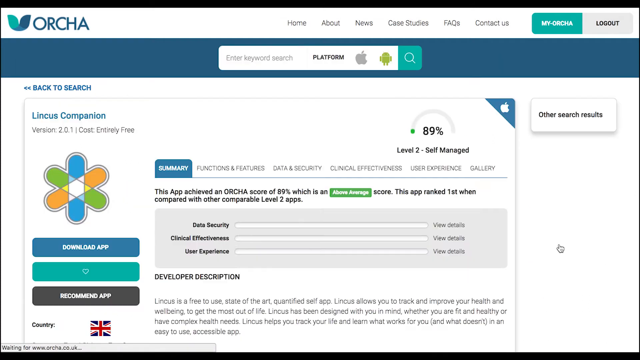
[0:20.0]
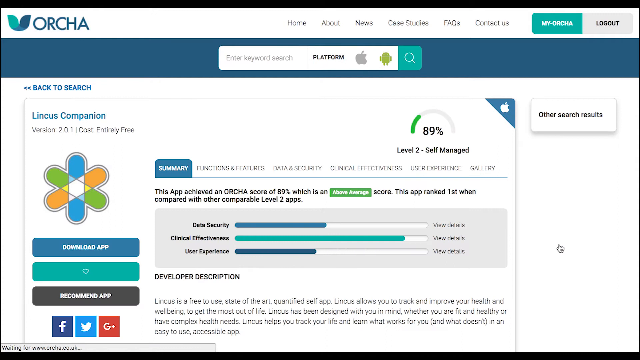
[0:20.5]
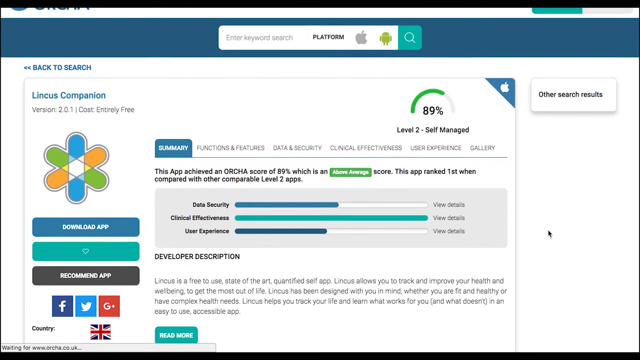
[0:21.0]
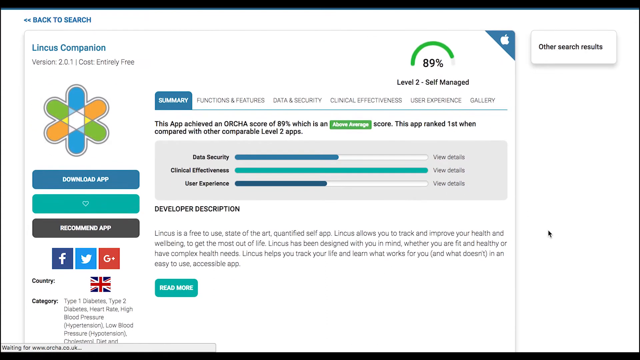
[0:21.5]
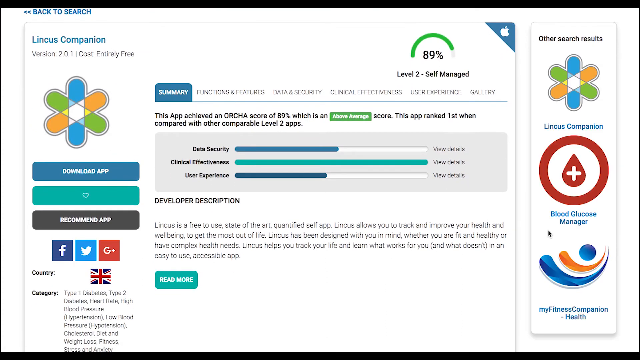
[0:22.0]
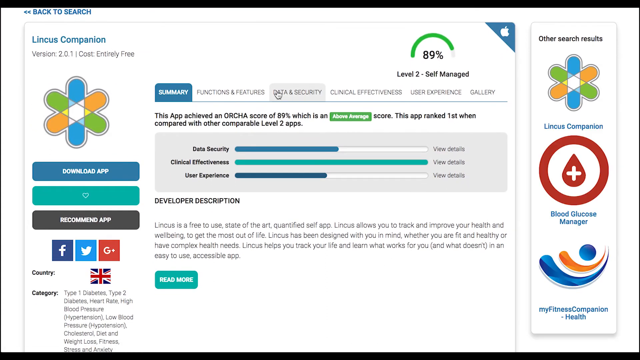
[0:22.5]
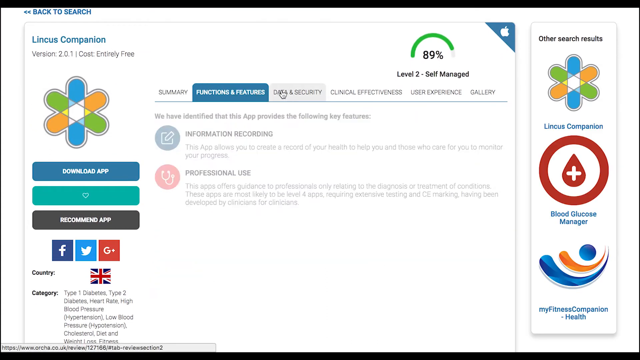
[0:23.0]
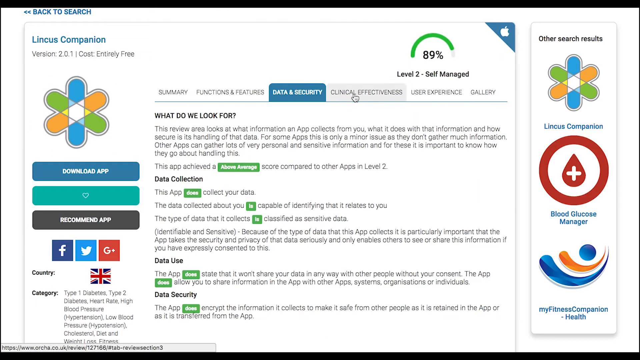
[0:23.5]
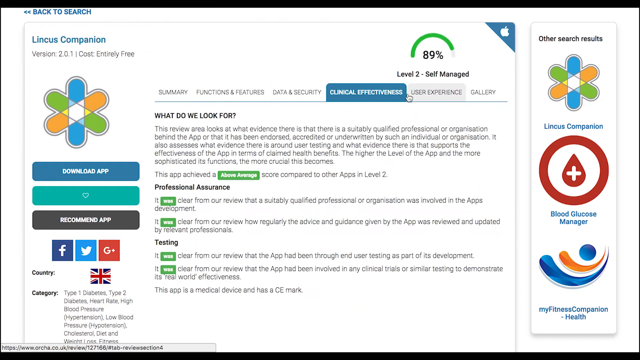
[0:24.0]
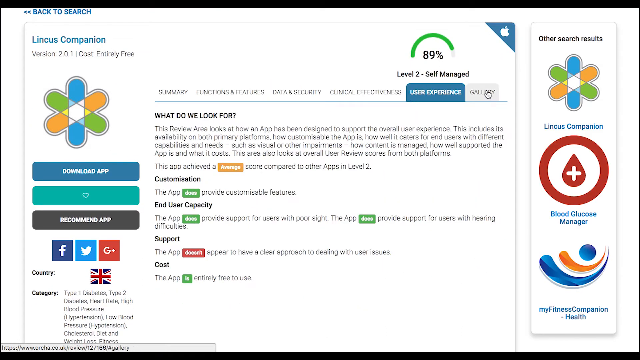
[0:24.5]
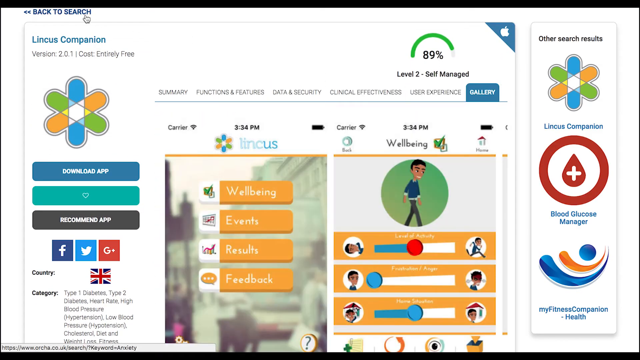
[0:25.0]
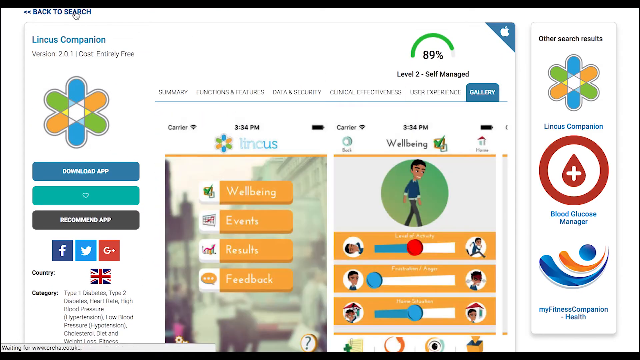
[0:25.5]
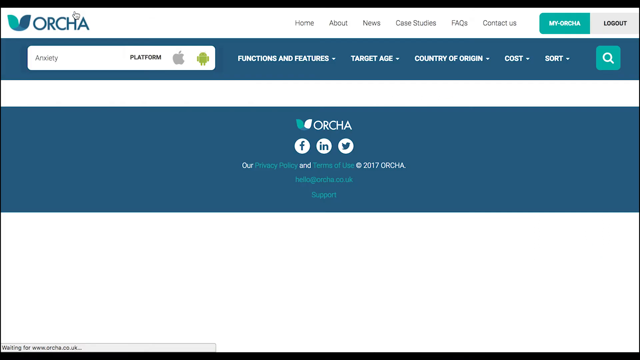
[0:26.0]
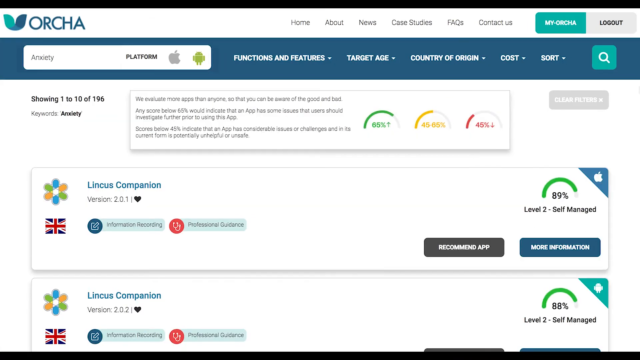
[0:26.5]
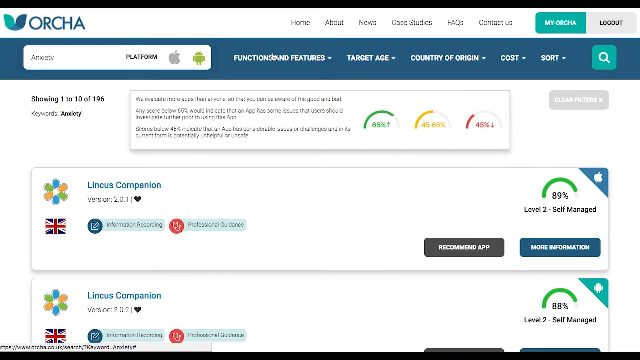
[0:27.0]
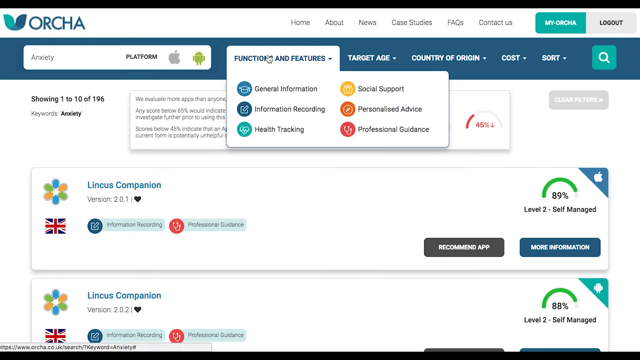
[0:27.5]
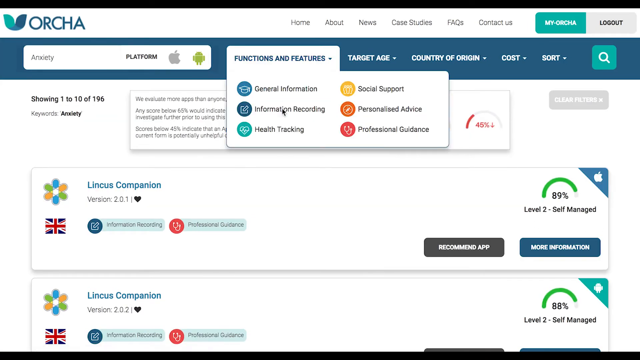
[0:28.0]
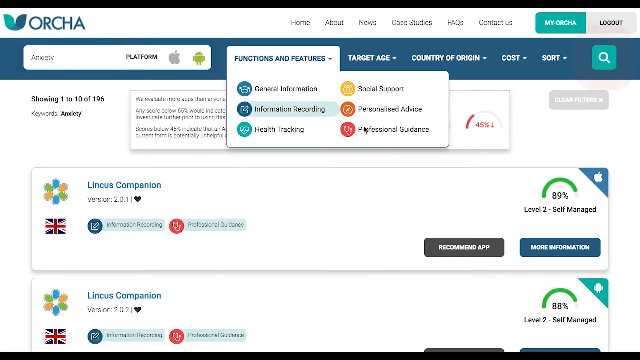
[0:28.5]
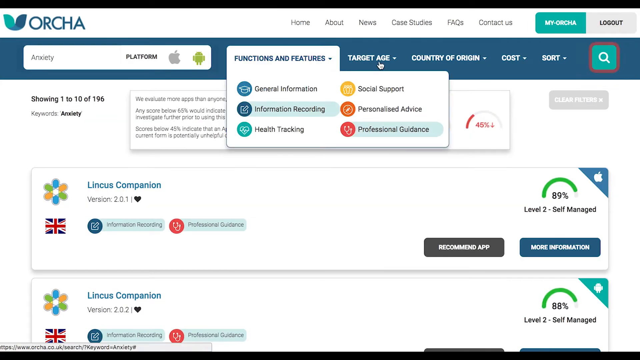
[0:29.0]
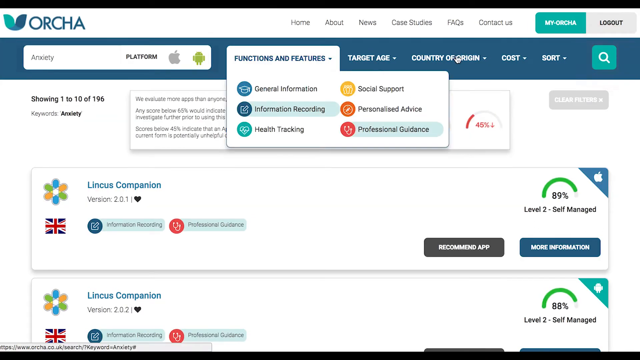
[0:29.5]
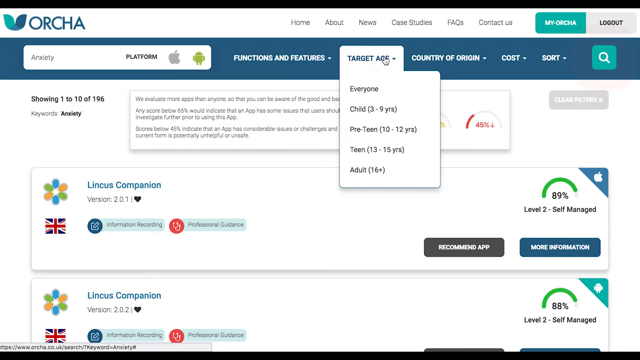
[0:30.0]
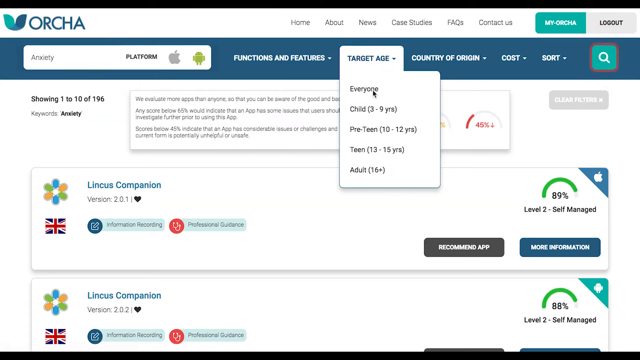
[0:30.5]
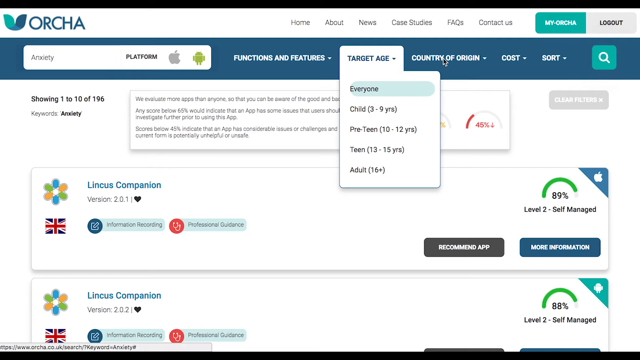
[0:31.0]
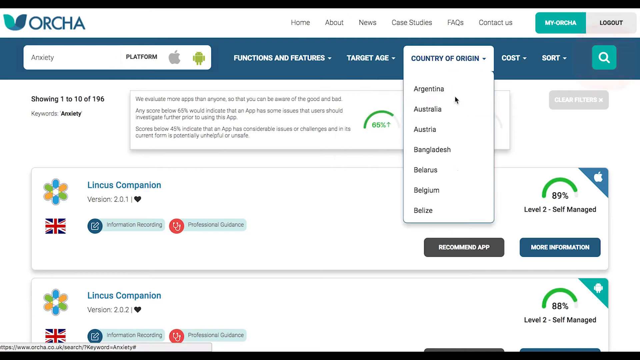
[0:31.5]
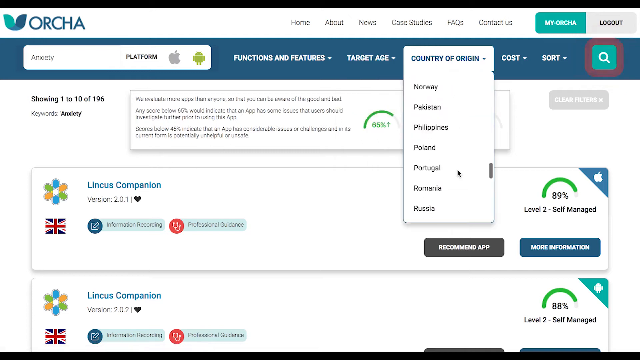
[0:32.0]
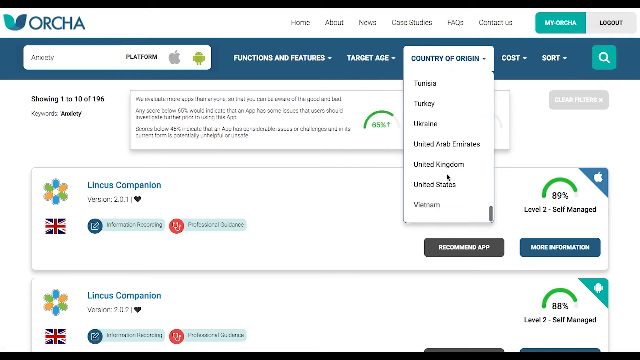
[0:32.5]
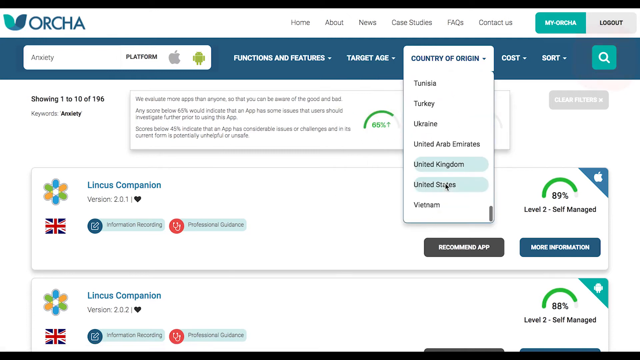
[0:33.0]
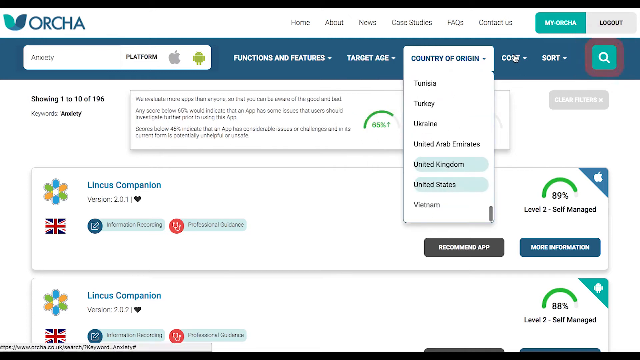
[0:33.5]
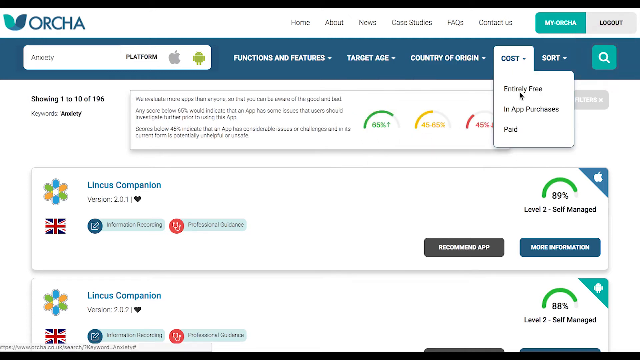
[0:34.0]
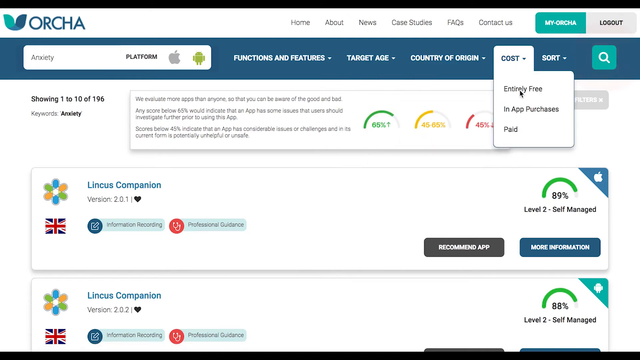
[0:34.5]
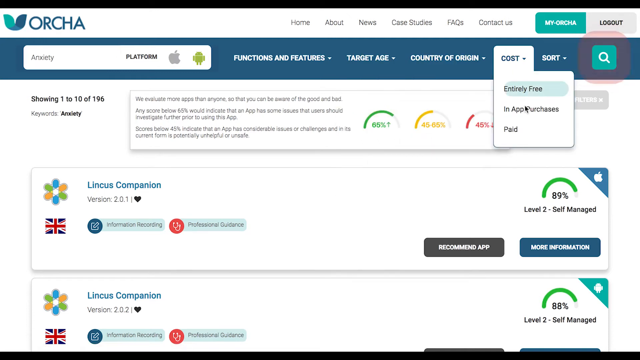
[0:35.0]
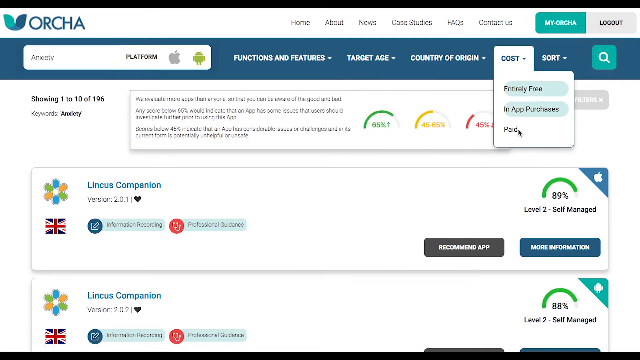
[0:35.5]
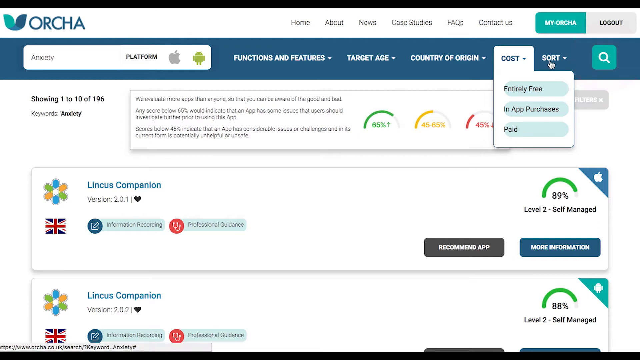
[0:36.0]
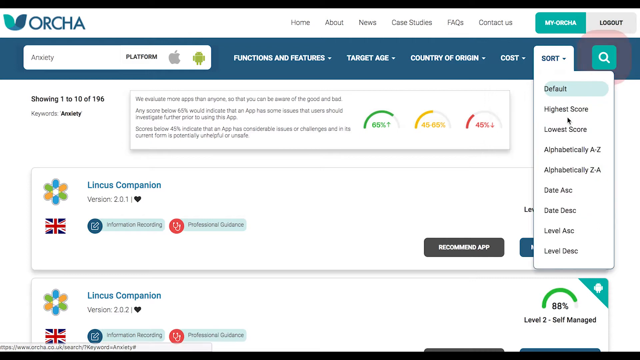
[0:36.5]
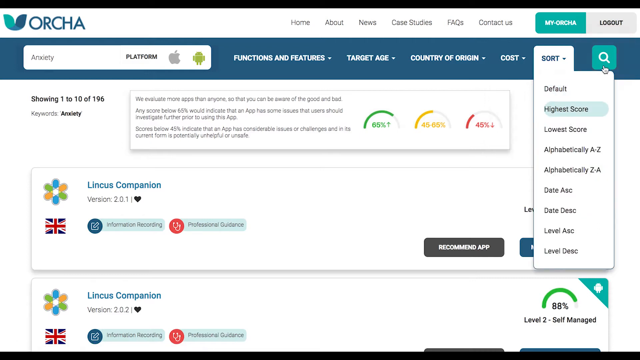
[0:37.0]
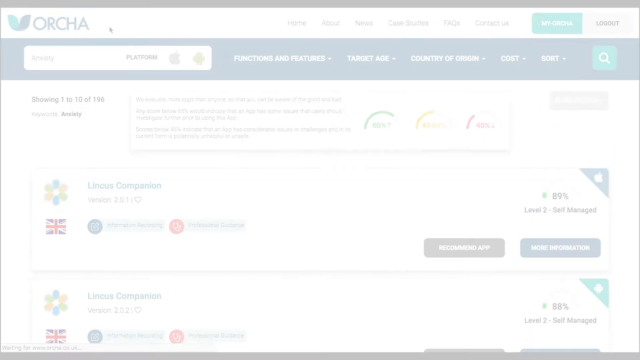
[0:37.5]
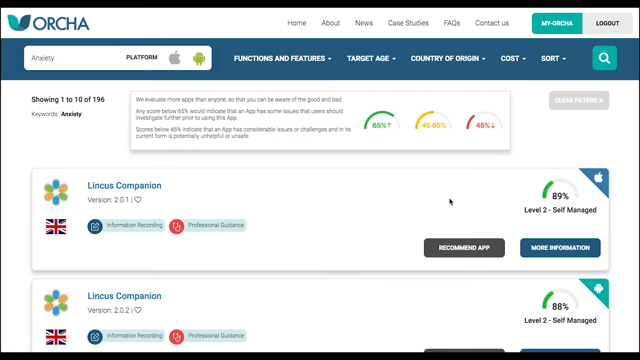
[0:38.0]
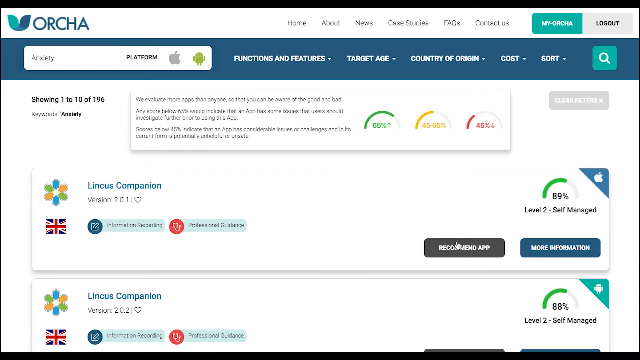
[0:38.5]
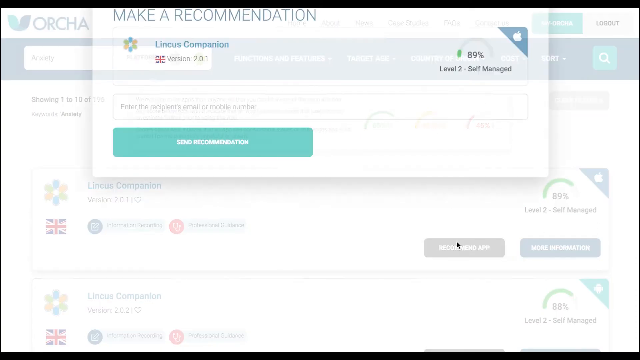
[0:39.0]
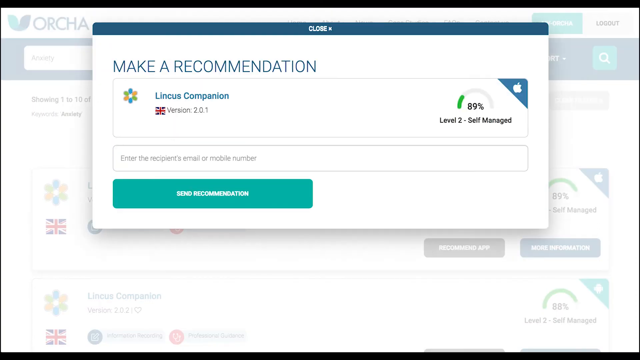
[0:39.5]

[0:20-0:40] The person controlling the mouse scrolls down the page to more information about the Lincus Companion app, which is described as an app allowing a user to track and improve their health and well-being. The description continues: "Lincus has been designed with you in mind whether you are fit and healthy or have complex health needs. Lincus helps you track your life and learn what works for you and what doesn't in an easy to use accessible app." The user flicks between the different options on the website, clicking on functions and features, data and security, clinical effectiveness and user experience reviews, moving through them very quickly with not enough time to read everything. The user returns to the Orcha home page and clicks on the Functions and Features tab, then the target age tab and country of origin, selecting United States and United Kingdom. Under the cost feature, all three options are selected: entirely free, in-app purchases and paid. A sort by filter is applied to show the highest scored apps first. The user then clicks a recommend app button for Lincus Companion.